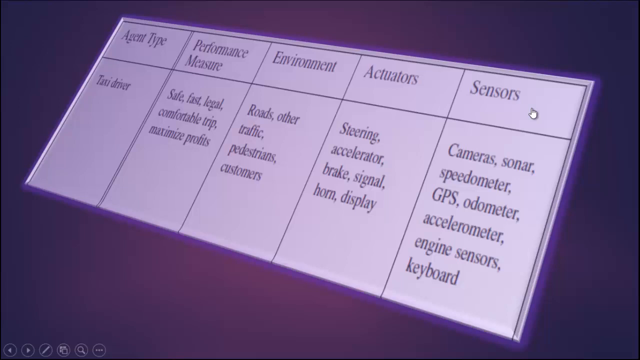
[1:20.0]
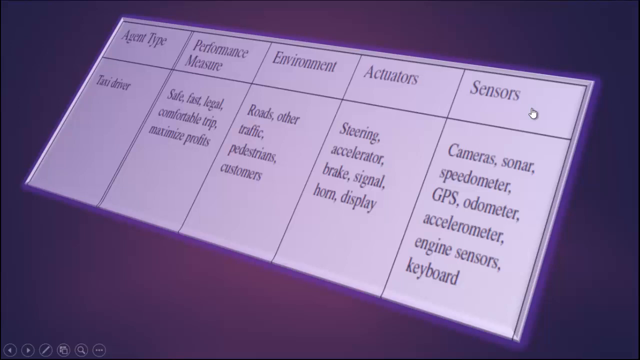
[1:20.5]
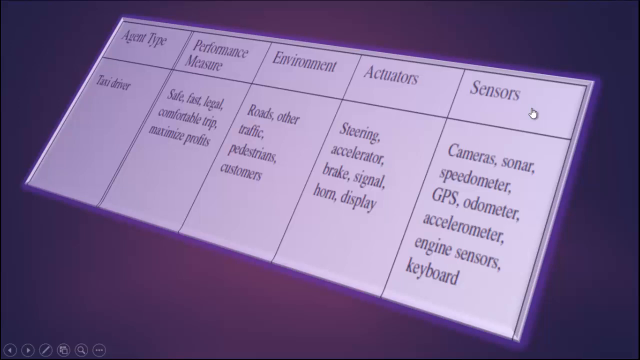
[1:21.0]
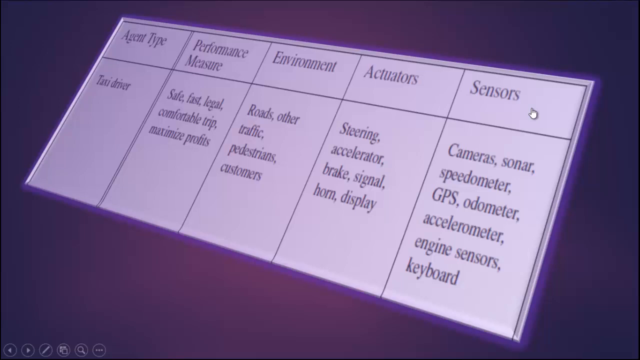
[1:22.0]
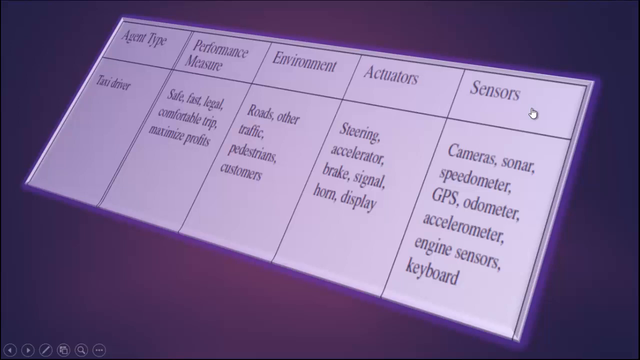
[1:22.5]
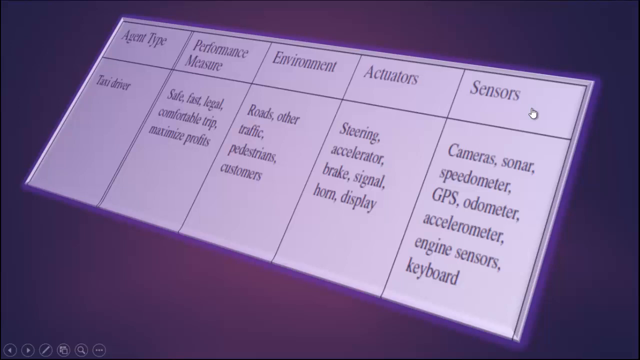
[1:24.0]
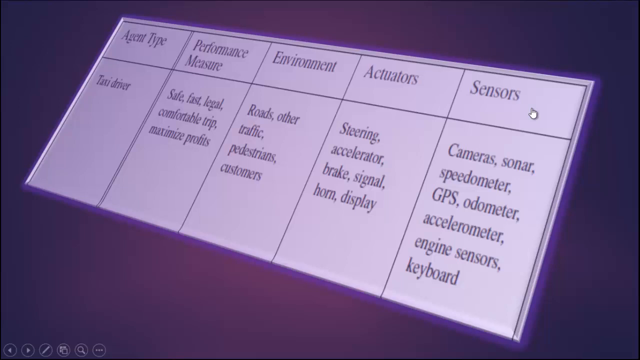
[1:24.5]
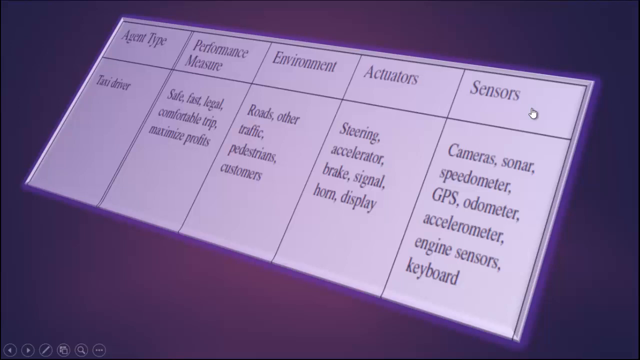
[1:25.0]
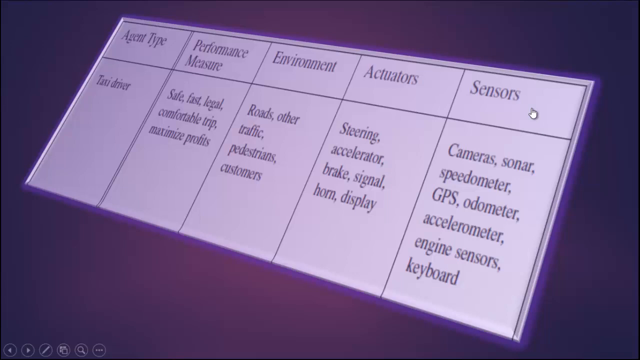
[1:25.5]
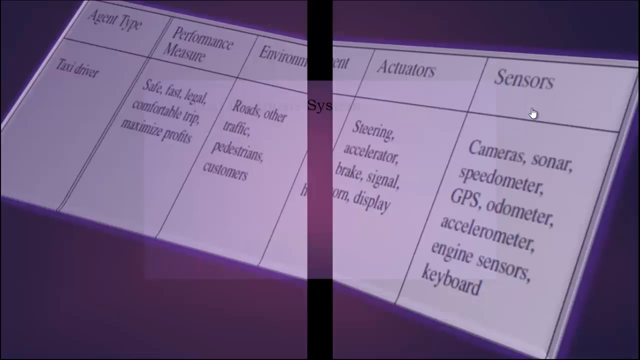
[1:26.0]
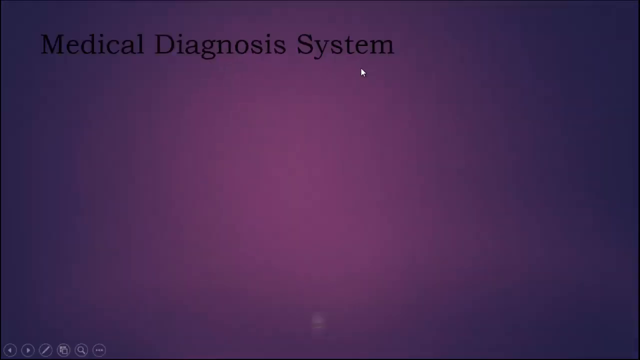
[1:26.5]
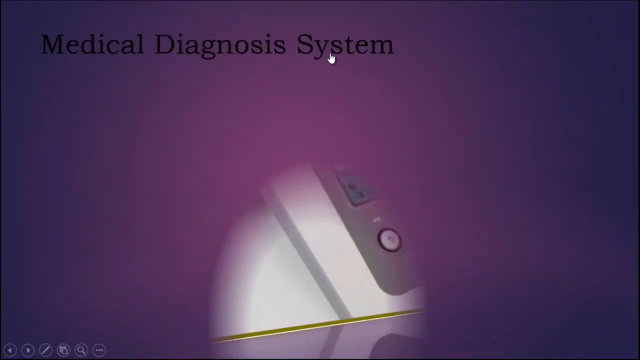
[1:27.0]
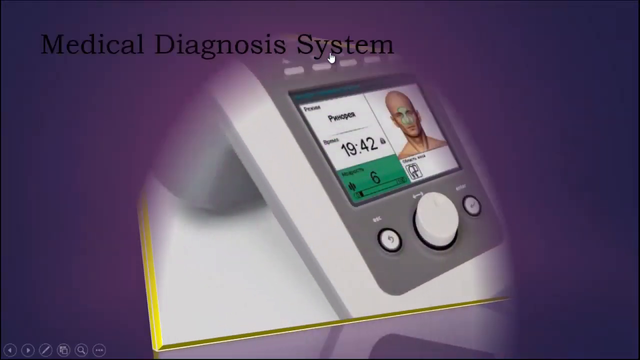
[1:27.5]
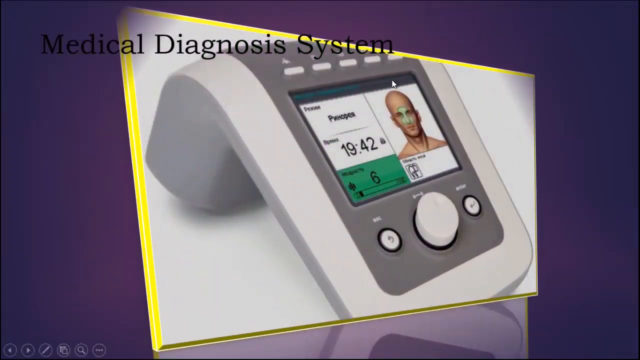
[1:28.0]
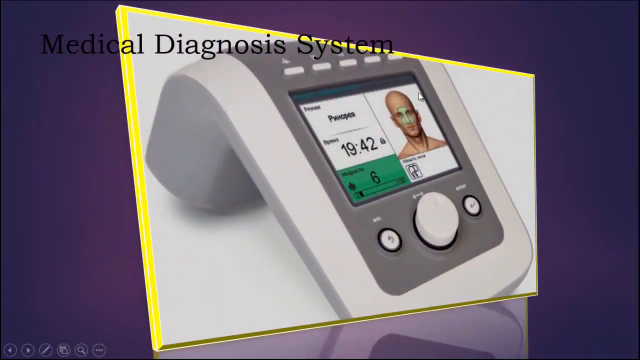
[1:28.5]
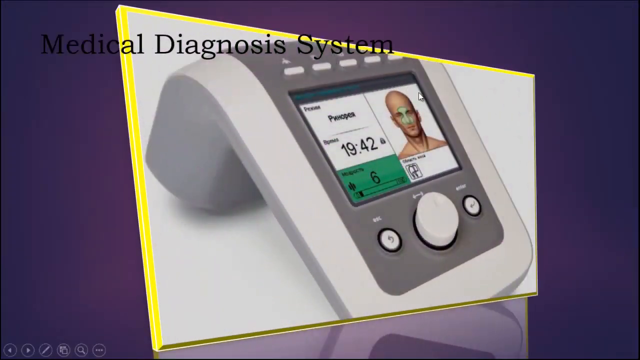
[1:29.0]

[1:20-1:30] From left to right, the table's headings are "agent type," "performance measure," "environment," "actuators" and "sensors," and below them are the parts of the vehicle each relates to. The image splits in half and slides off the page. Over the purplish background, "medical diagnosis system" is at the top of the slide. An image of some type of equipment appears. It has a display showing an image of a man and a meter colored green. At the bottom there is a big white knob that can rotate left and right, with two smaller circular knobs on either side of it: the one on the left has an arrow going counterclockwise, and the one on the right has an arrow pointing directly to the left. On the picture of the man's face, who is bald, the area between the brows and the nose and just to the sides is highlighted in a light green shade.